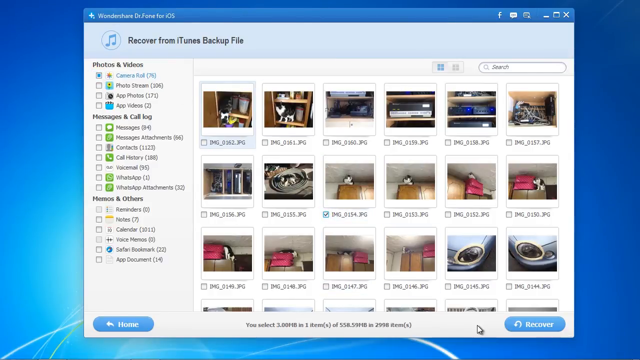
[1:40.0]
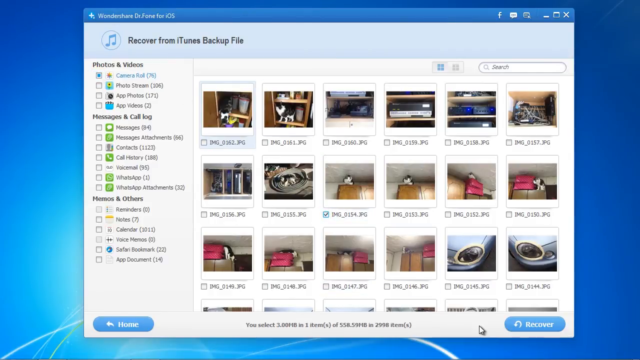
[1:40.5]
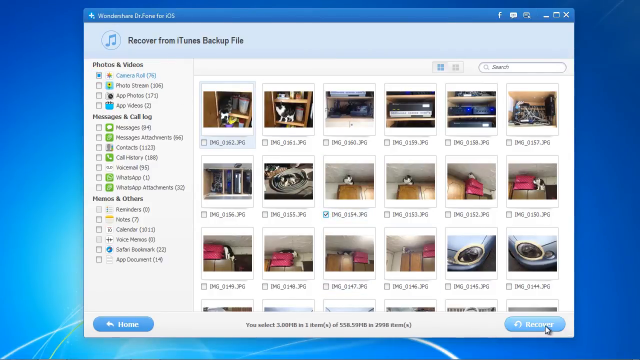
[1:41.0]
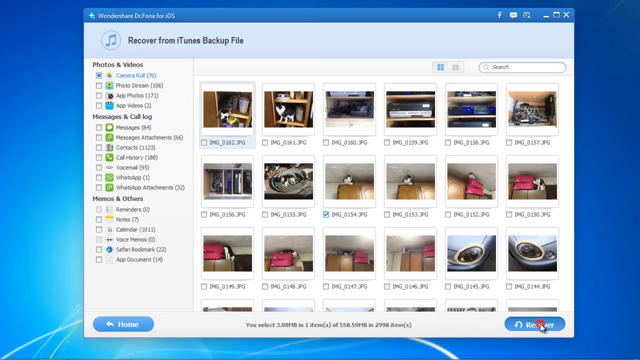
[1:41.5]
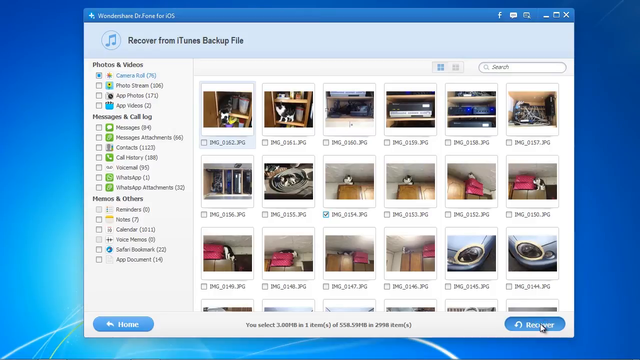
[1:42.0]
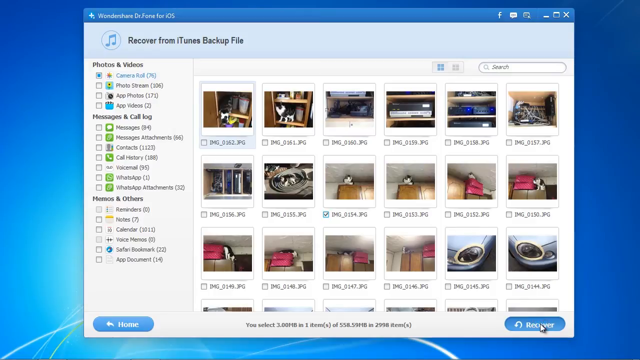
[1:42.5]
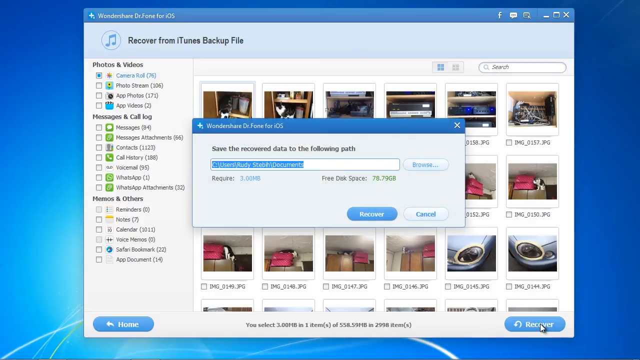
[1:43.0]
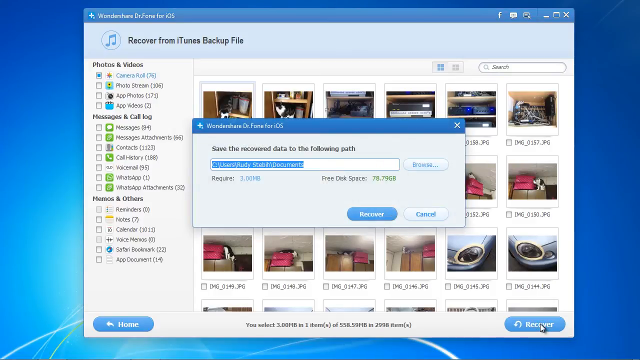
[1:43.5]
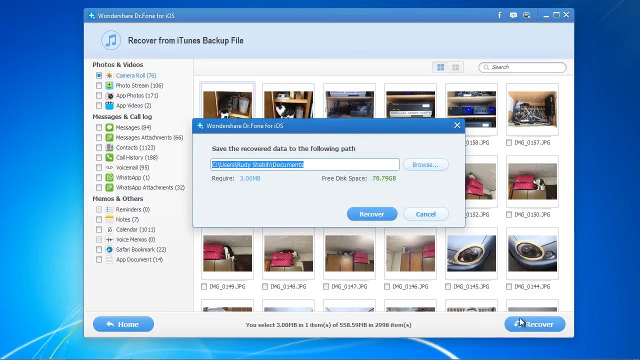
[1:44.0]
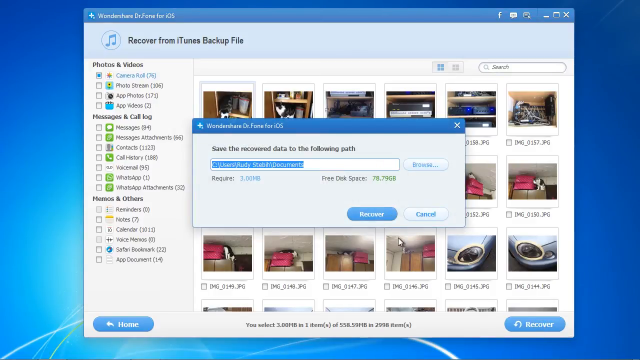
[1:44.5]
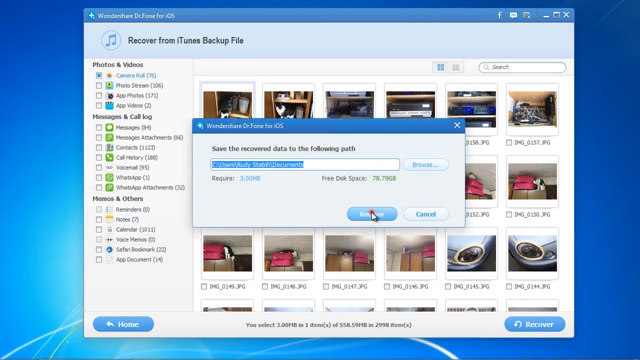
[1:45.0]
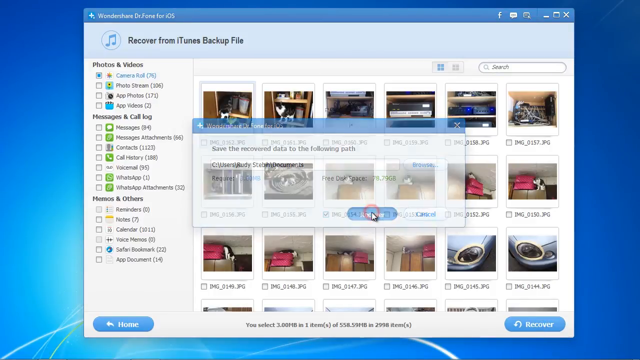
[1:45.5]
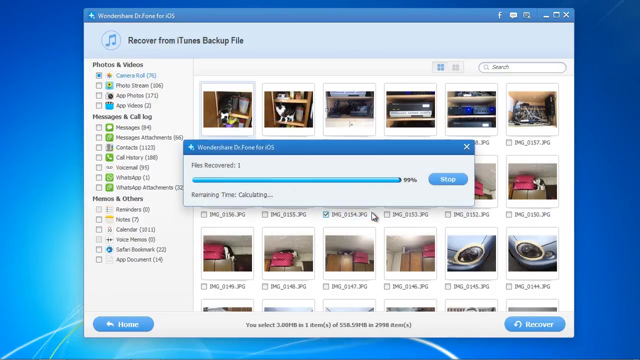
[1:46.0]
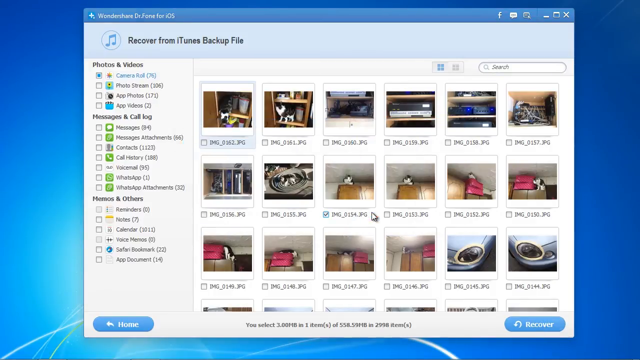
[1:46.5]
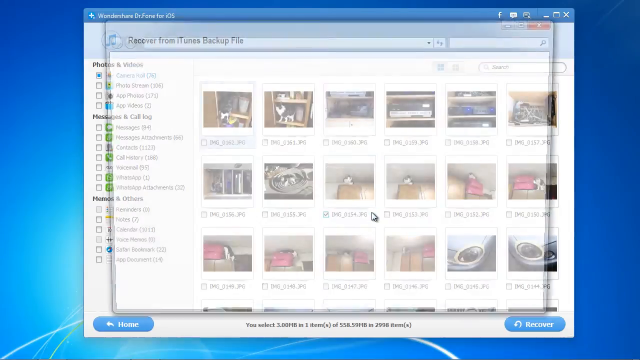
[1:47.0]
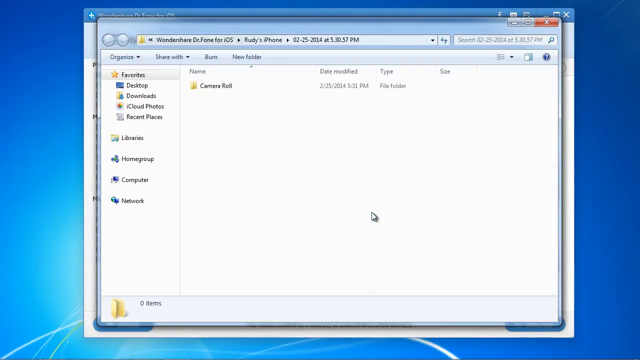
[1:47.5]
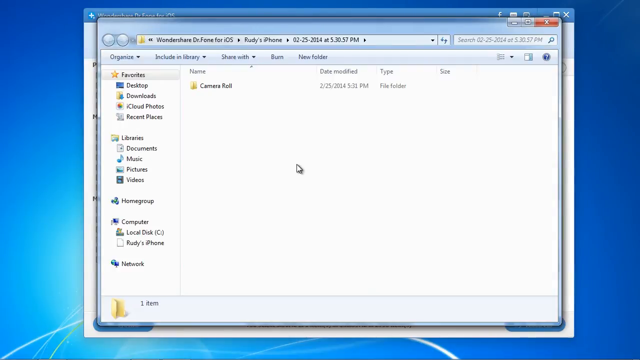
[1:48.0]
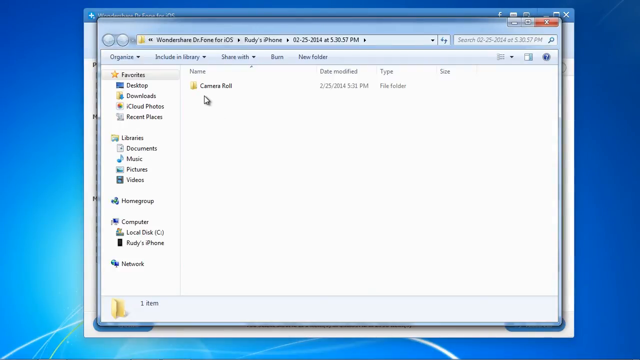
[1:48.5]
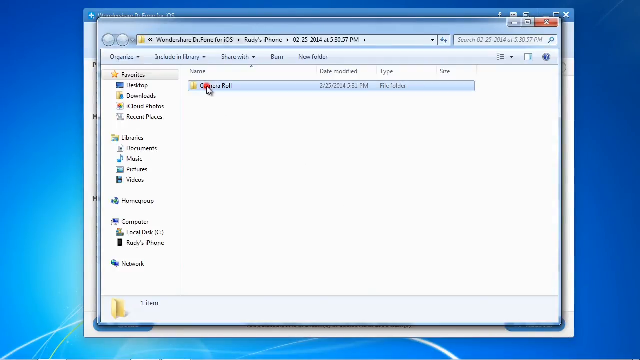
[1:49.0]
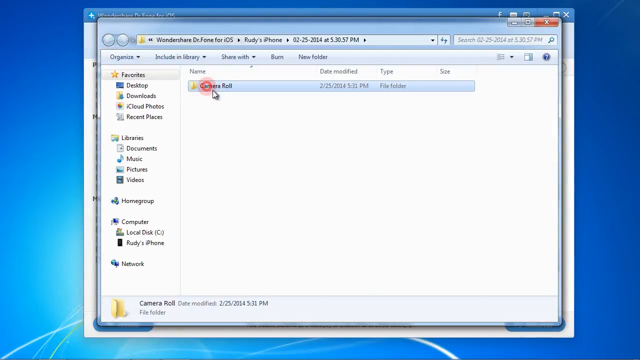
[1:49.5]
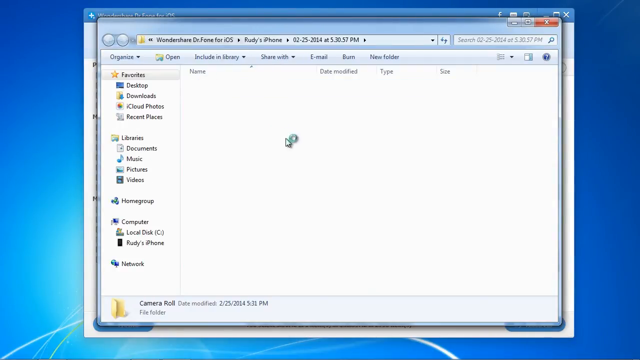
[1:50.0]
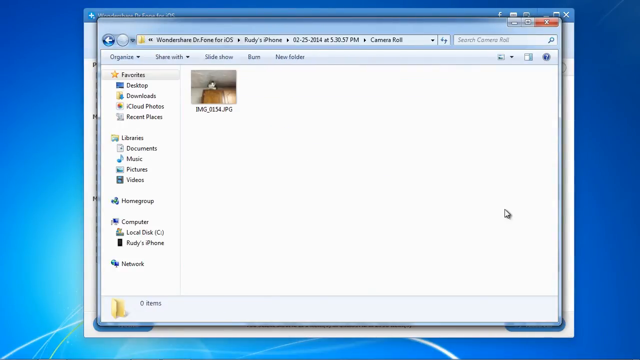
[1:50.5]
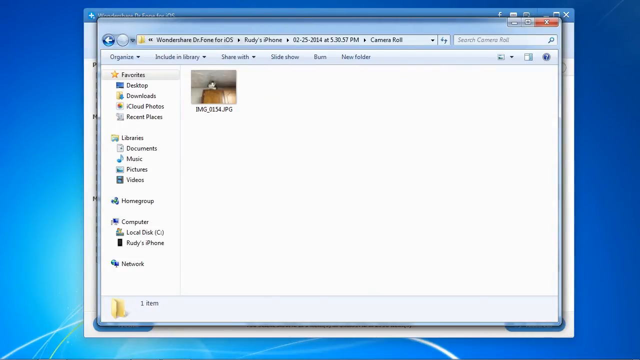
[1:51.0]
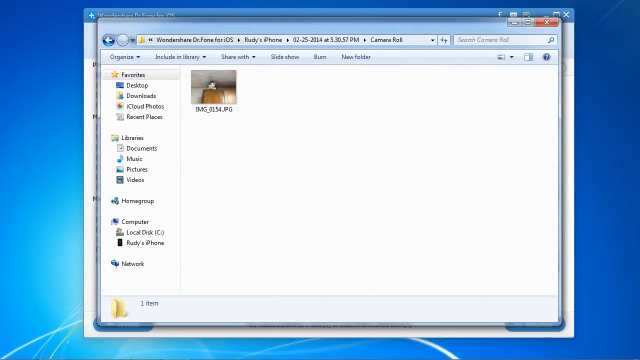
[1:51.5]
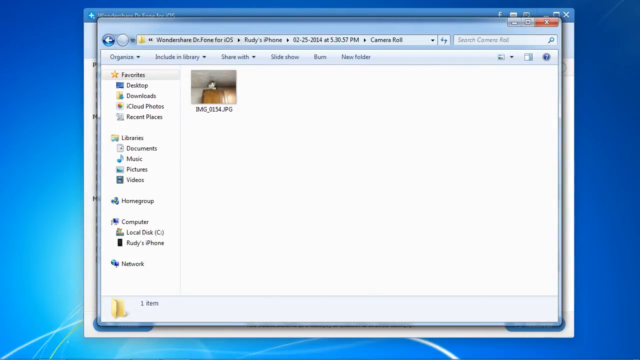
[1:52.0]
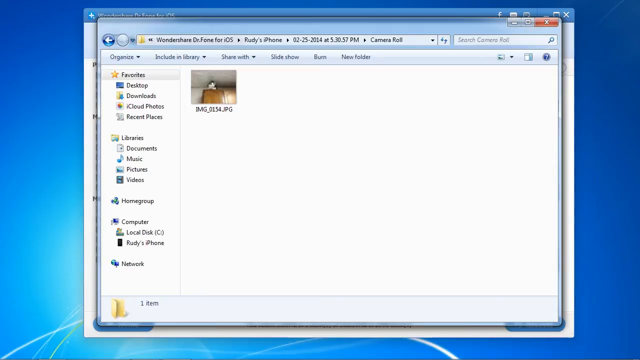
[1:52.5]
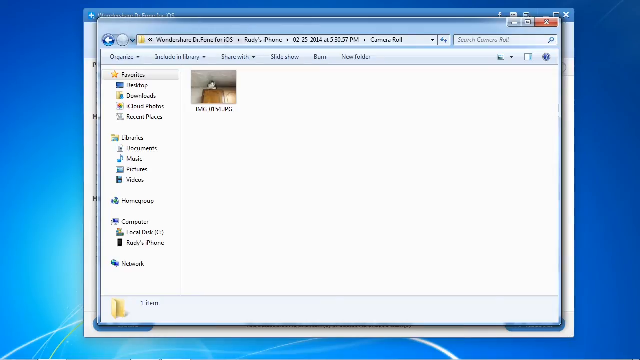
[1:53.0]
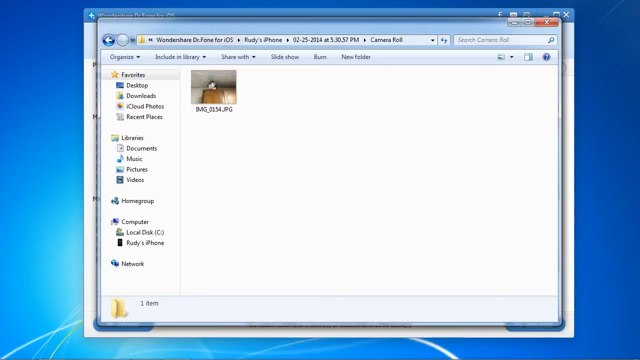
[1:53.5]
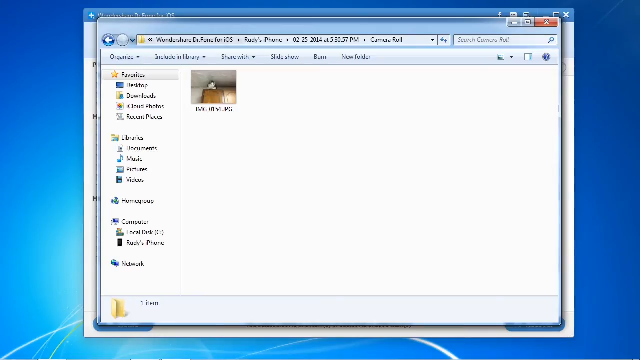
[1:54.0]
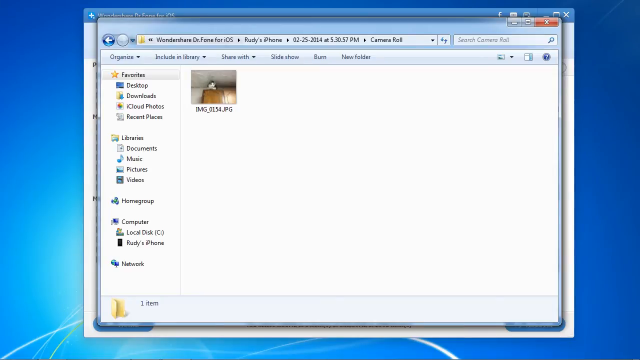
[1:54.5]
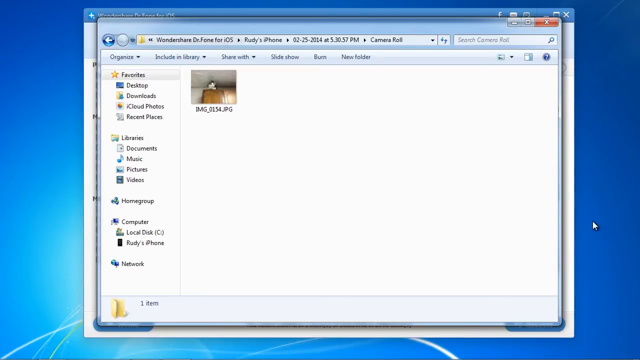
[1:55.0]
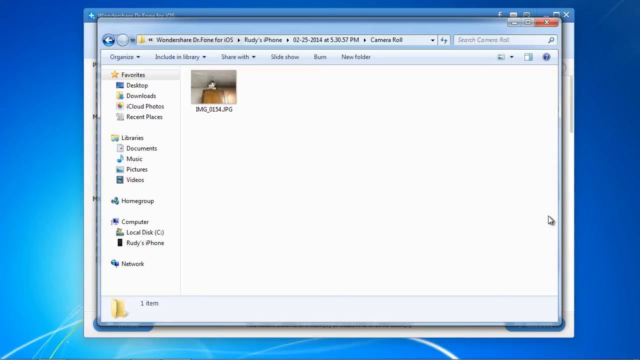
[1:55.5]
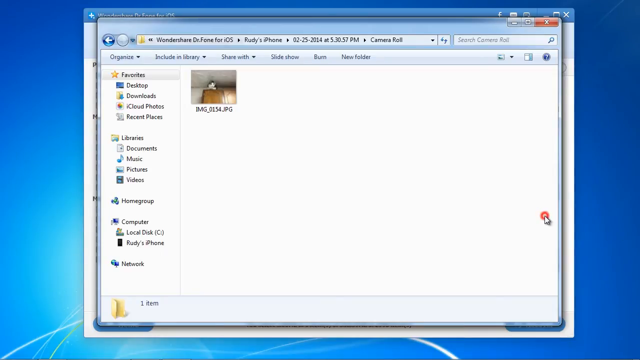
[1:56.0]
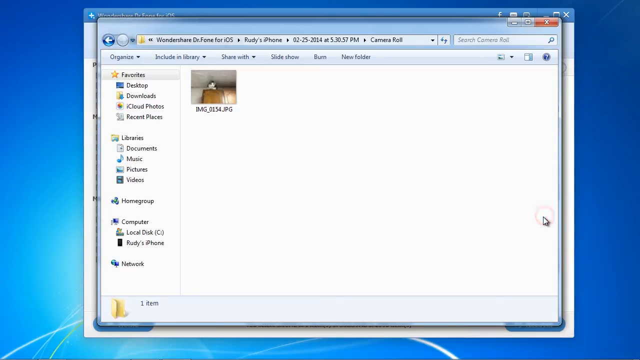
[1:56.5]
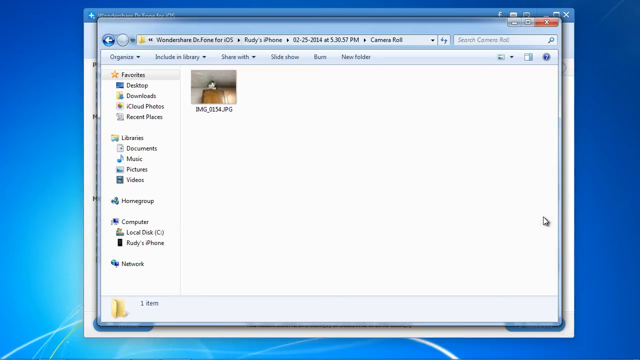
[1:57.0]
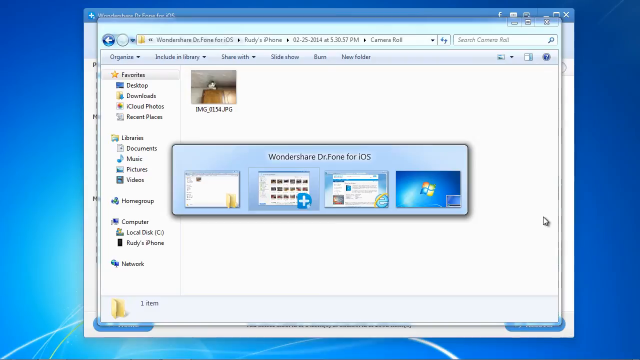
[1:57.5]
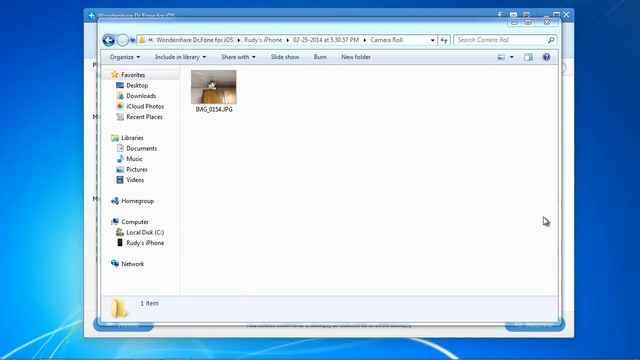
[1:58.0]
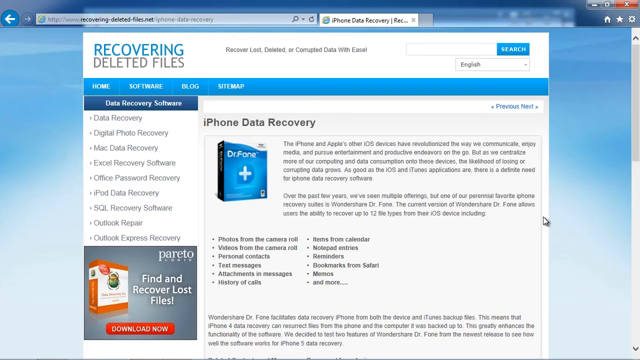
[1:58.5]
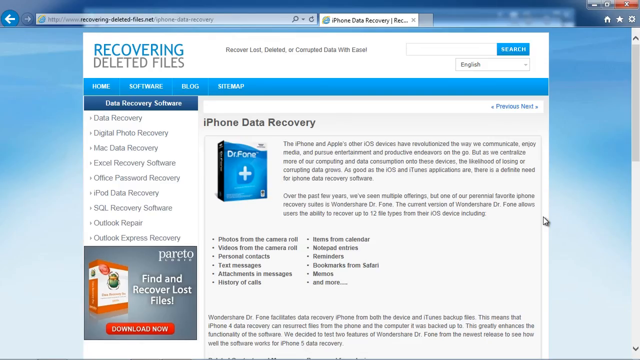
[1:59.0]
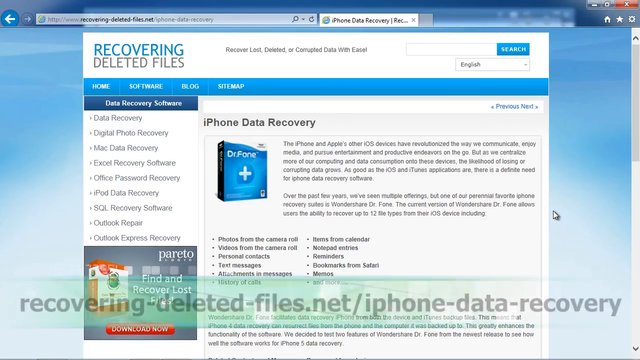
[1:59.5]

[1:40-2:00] The recovery options are still on screen, apparently recovering from an iTunes backup file. Several JPEGs appear in a few rows, seemingly mundane images: many pictures of cats and what look to be cabinets and shelves in a person's house. A pop-up window under Wondershare Dr. Phone for iOS appears, and the user goes to the option that says "save the recovered data to the following path," apparently choosing where to send the data. They then push a blue button that says "recover." Another pop-up window appears, and the user apparently chooses a camera roll from their files and adds a single picture of a cat sitting atop a cabinet to that location.